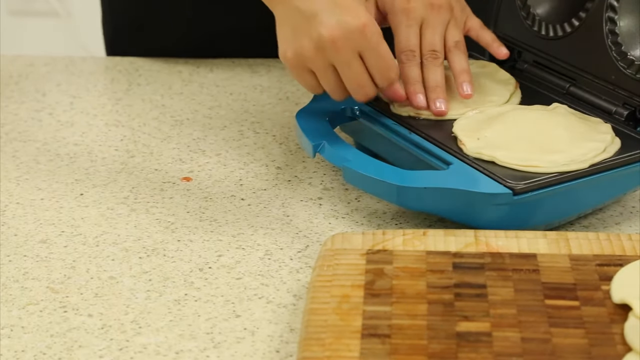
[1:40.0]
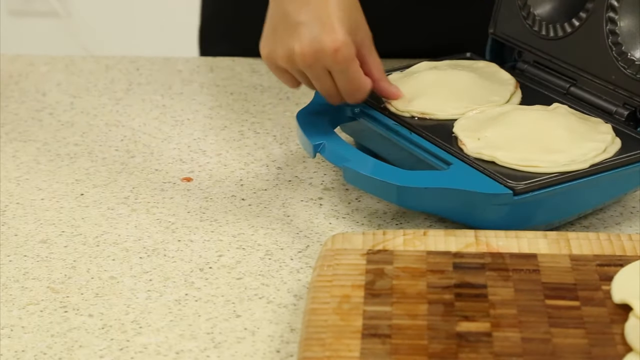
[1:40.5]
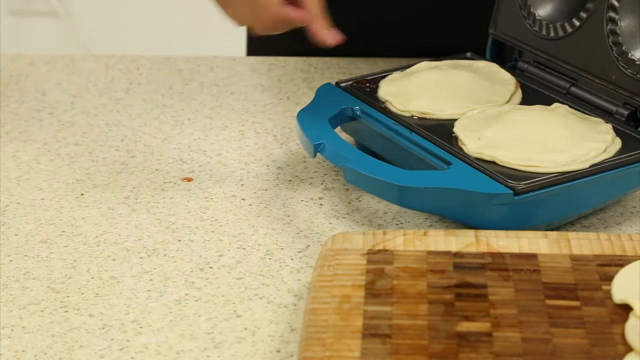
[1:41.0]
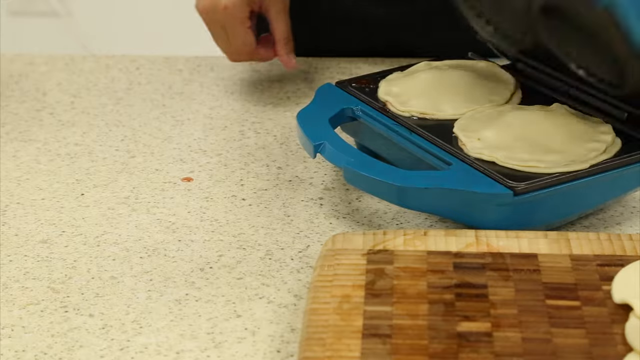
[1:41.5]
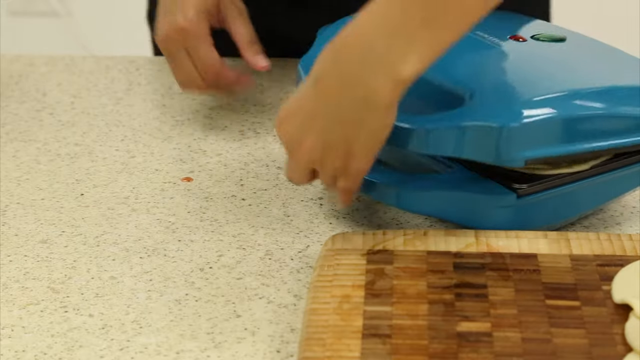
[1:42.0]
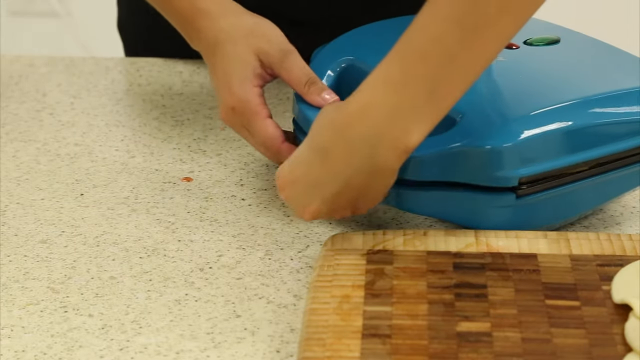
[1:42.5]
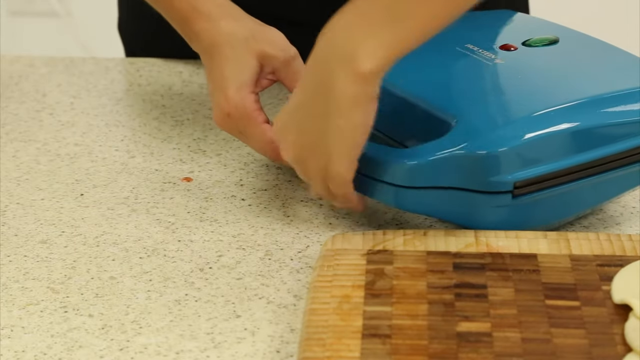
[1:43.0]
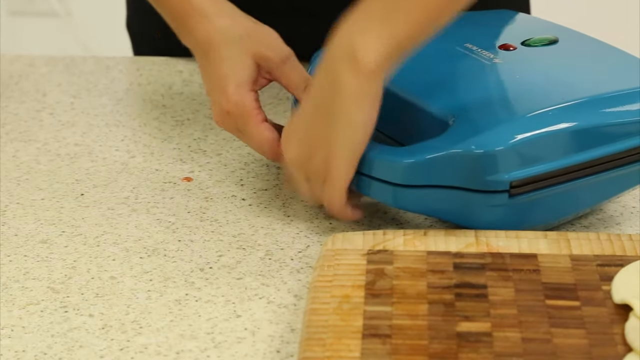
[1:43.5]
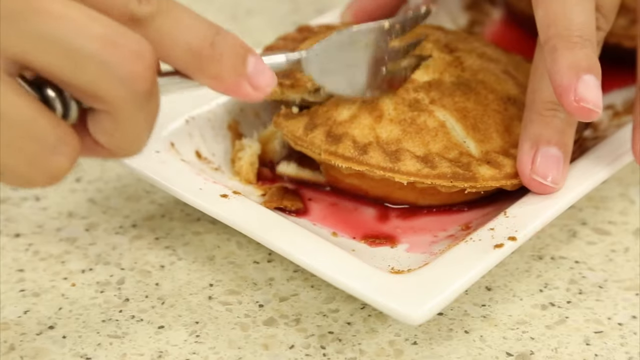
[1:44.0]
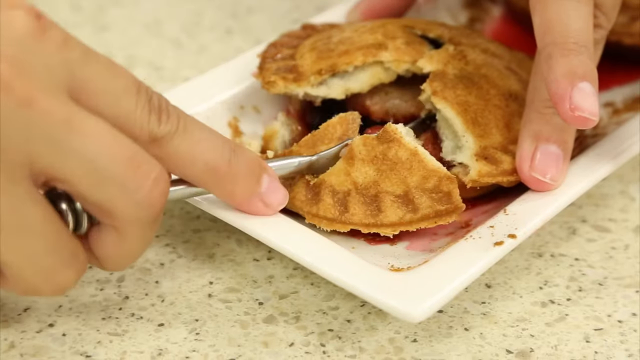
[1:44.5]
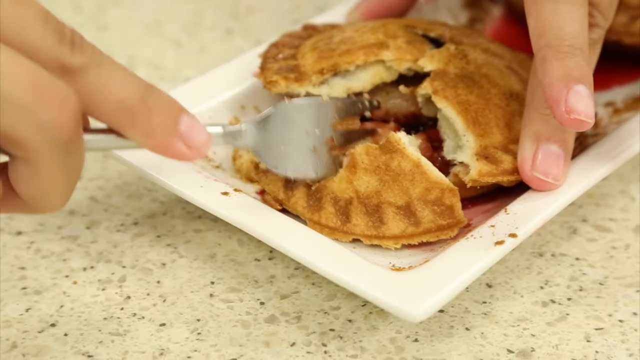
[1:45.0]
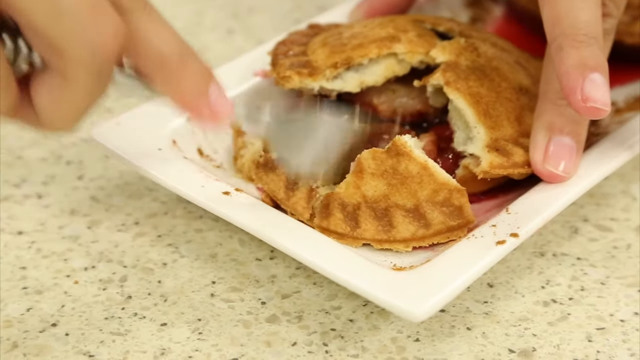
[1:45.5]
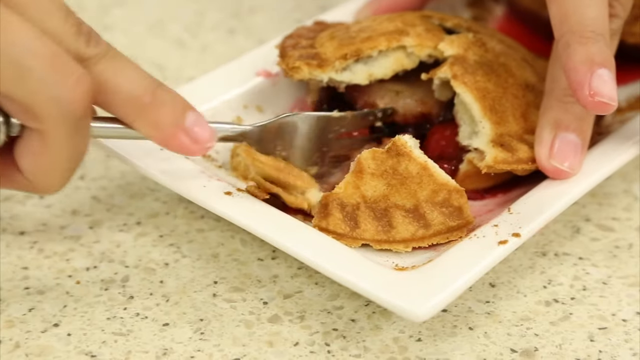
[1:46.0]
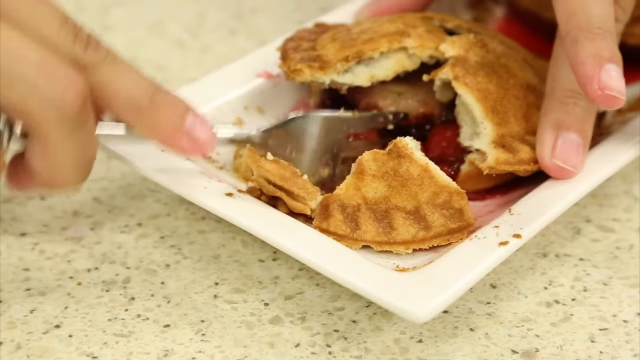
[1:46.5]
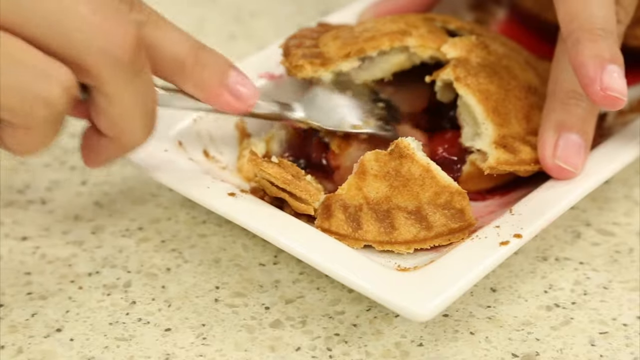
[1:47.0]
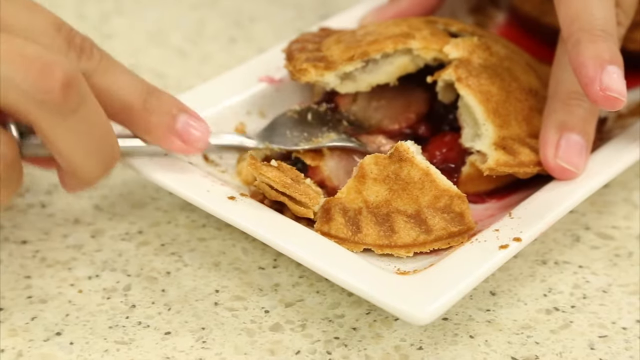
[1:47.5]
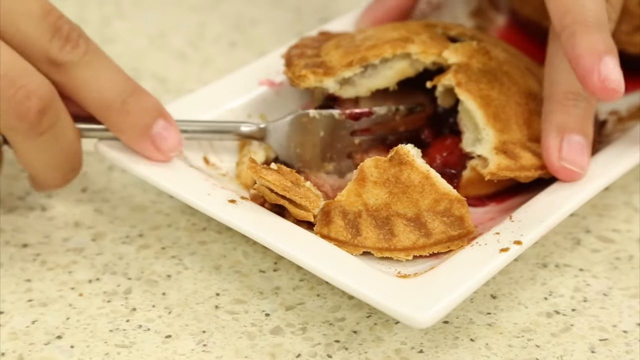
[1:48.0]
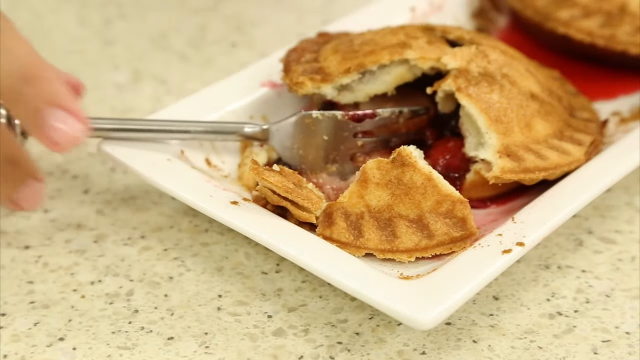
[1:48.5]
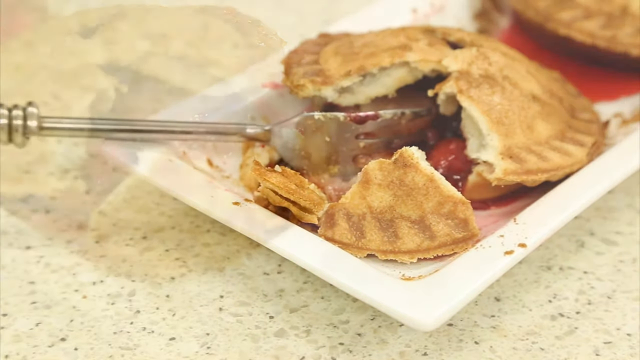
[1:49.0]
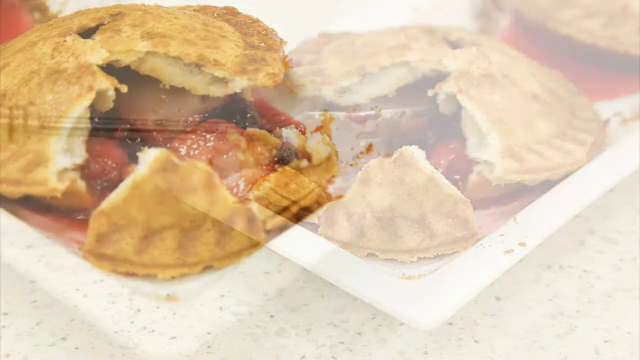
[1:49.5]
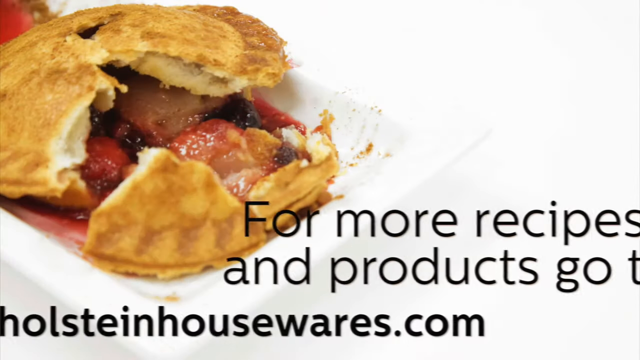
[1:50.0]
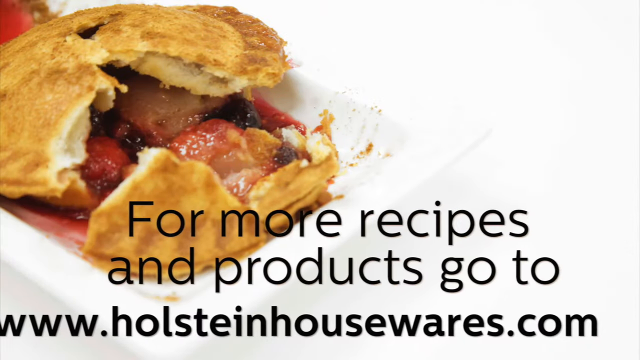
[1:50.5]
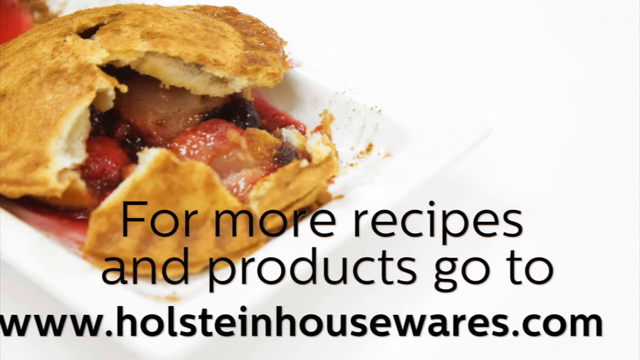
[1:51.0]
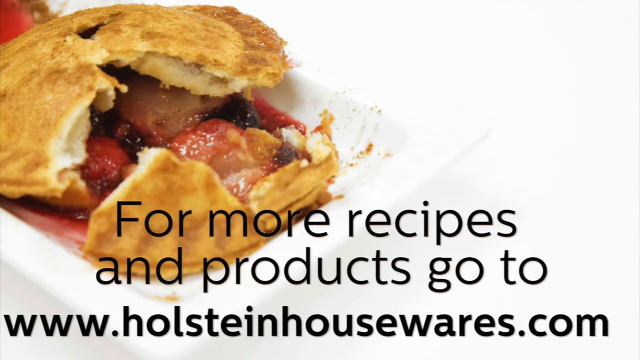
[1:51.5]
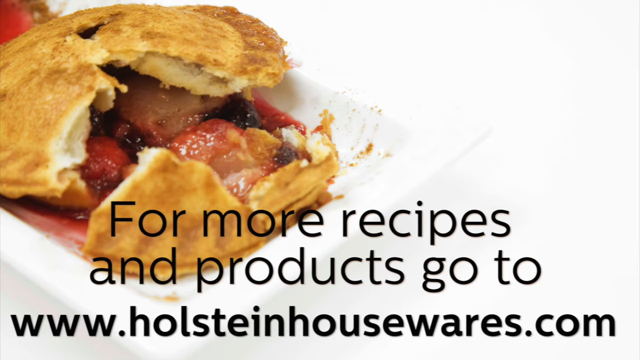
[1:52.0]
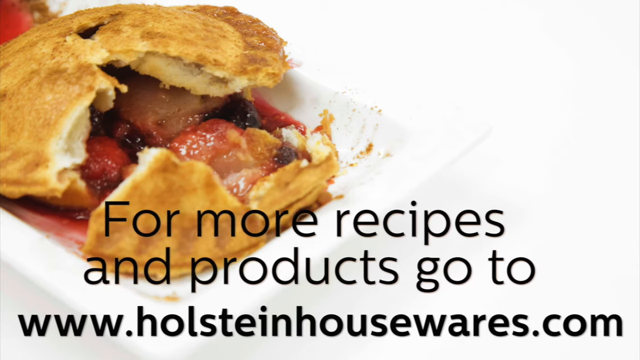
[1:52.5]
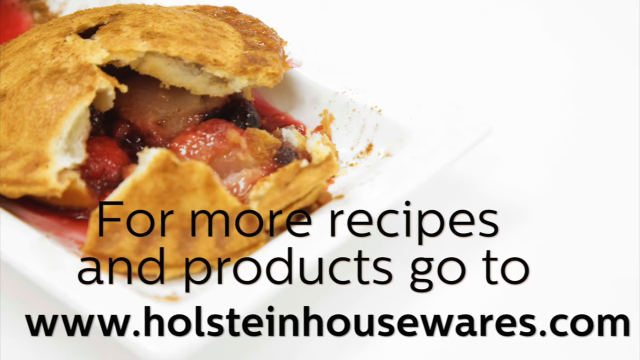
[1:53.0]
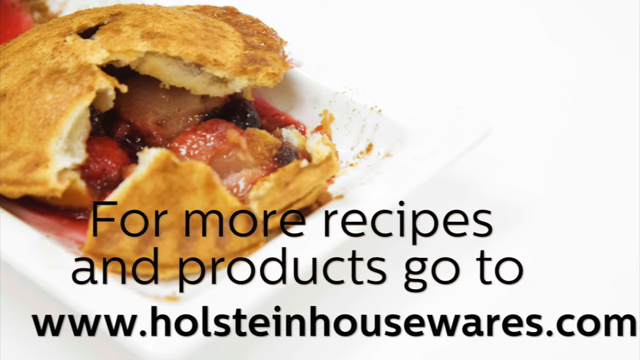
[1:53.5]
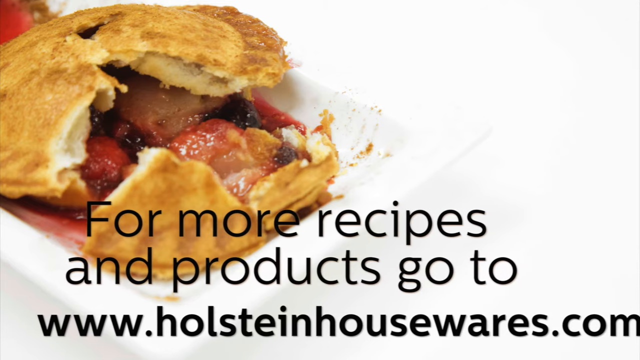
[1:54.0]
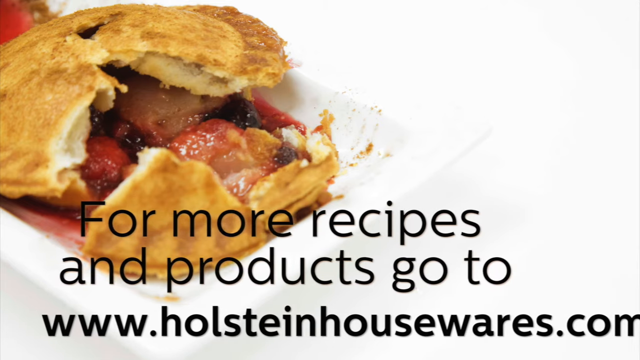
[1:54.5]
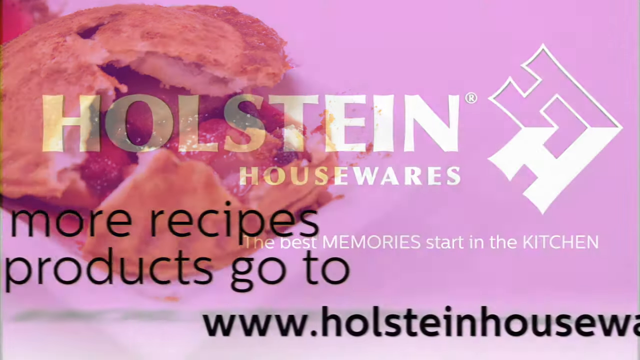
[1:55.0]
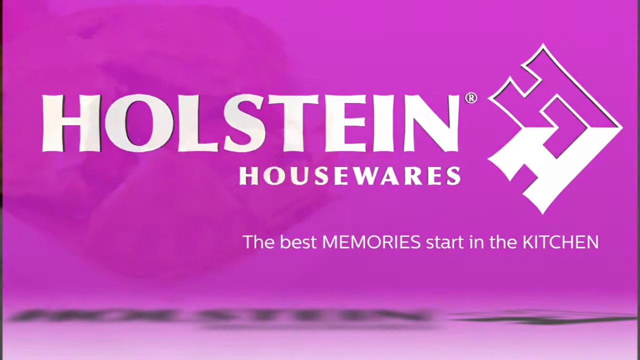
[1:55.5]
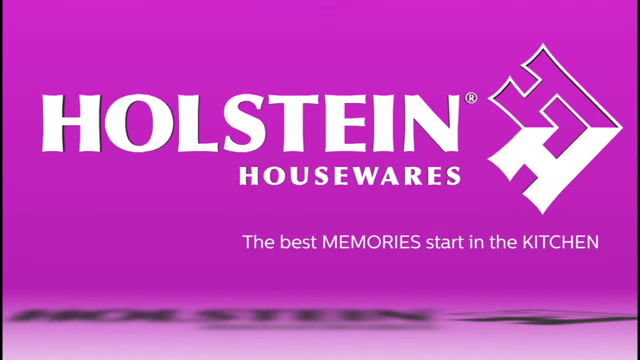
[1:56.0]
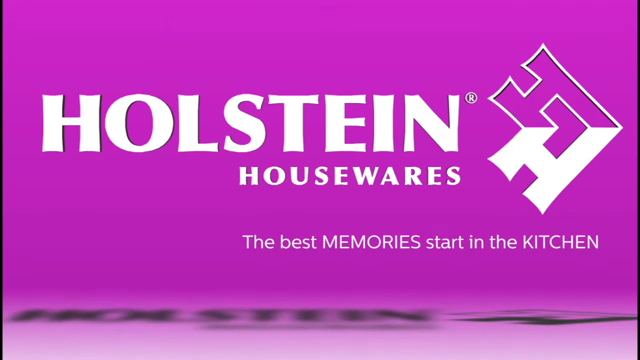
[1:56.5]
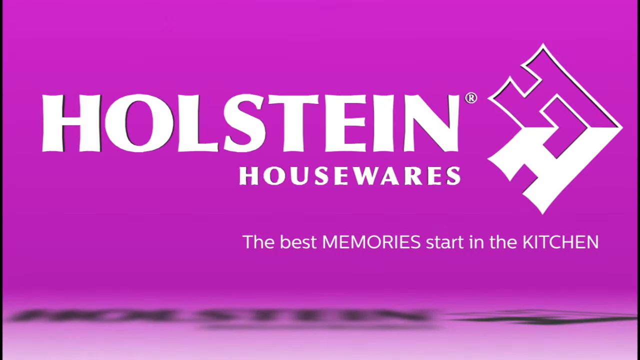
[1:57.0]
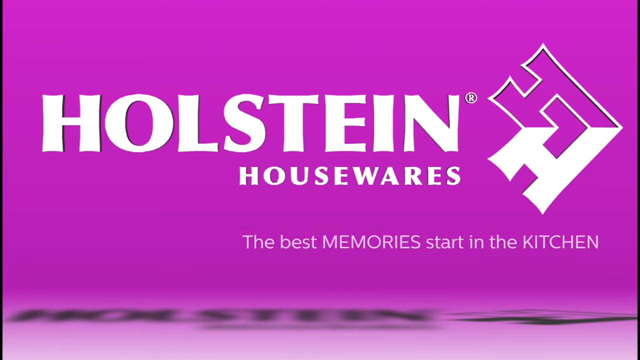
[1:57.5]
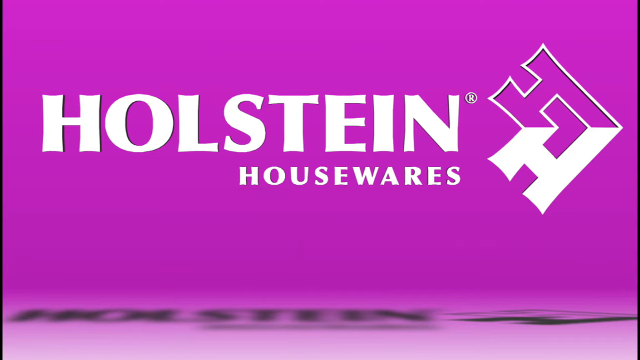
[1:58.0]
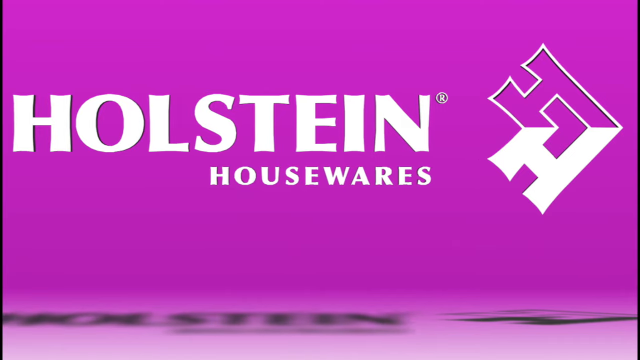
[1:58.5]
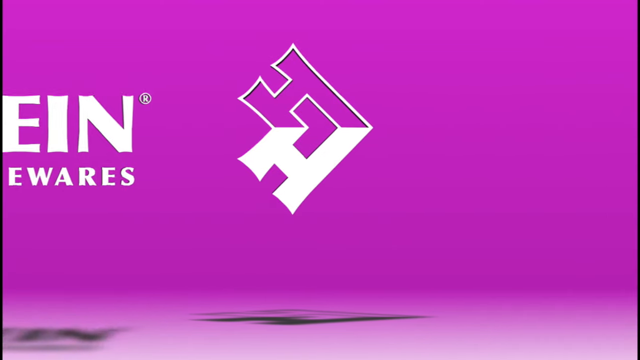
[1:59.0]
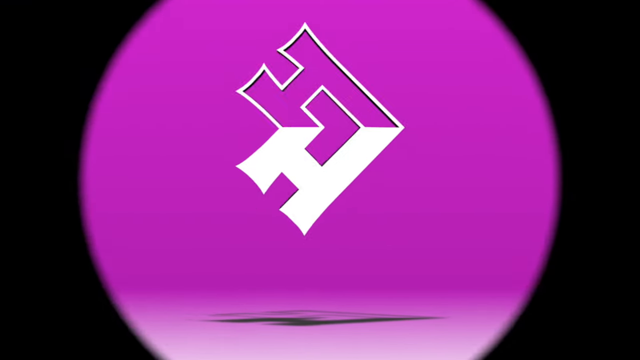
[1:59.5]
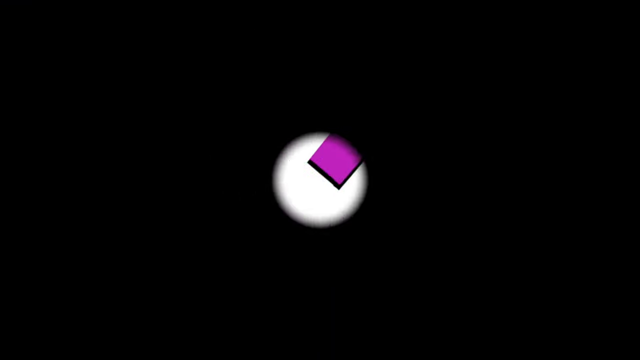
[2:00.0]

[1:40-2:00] The toaster is closed so the contents can cook. The finished pie is shown: the outside looks crunchy, while the filling looks soft and moist.